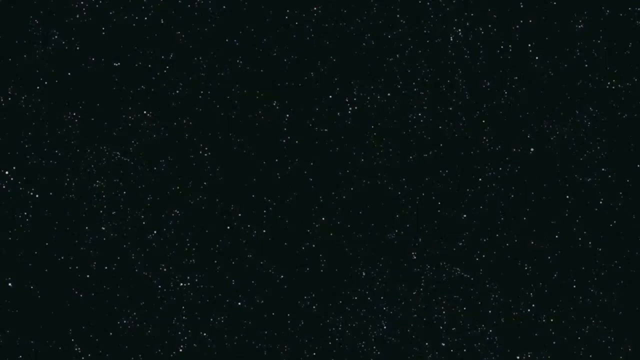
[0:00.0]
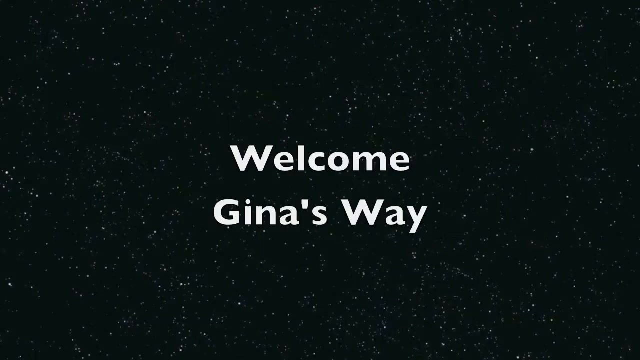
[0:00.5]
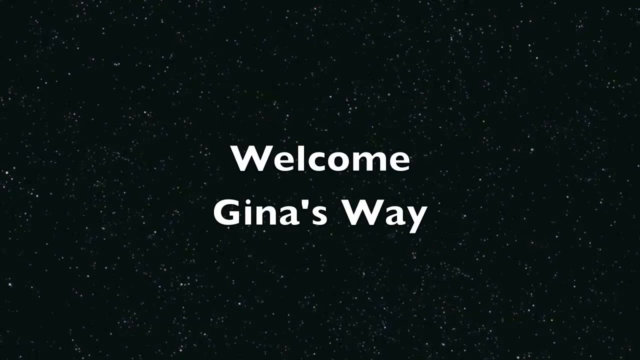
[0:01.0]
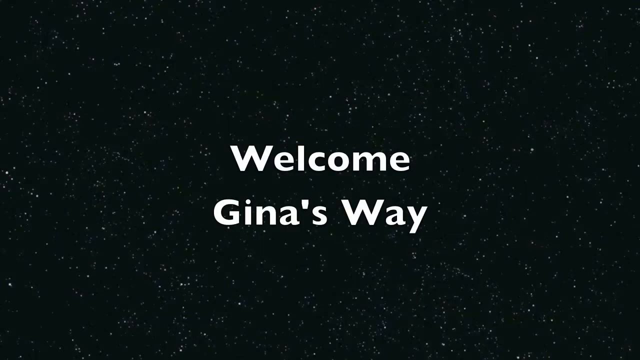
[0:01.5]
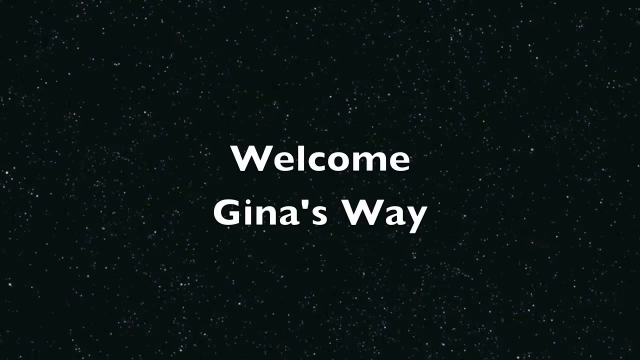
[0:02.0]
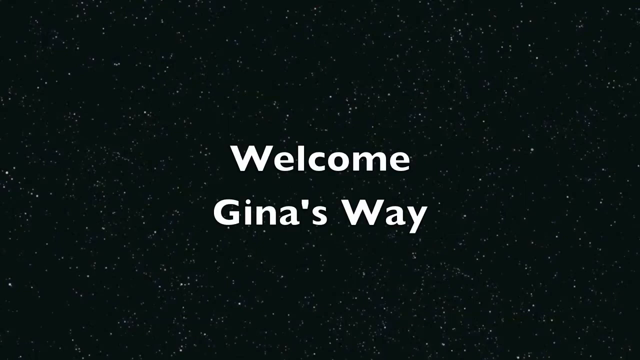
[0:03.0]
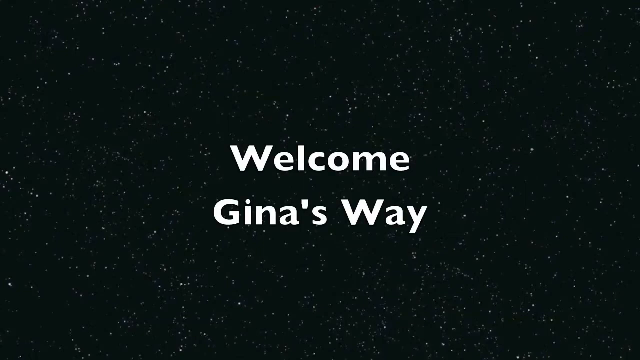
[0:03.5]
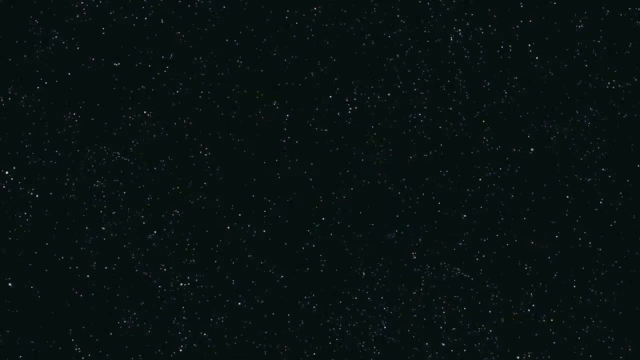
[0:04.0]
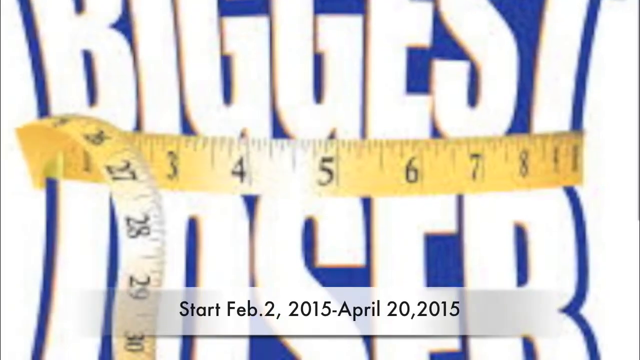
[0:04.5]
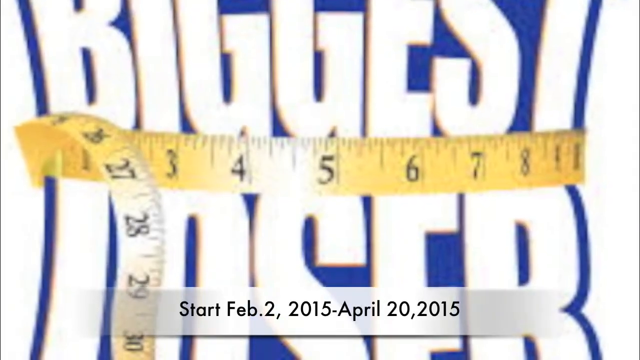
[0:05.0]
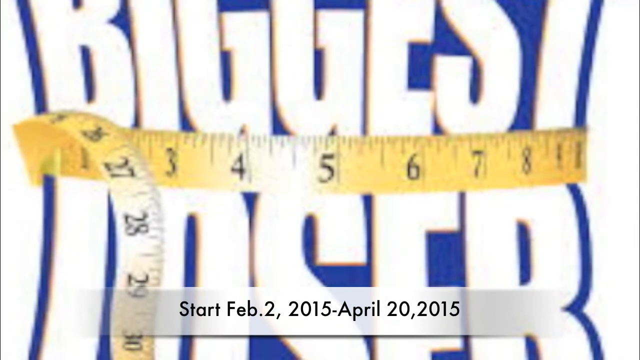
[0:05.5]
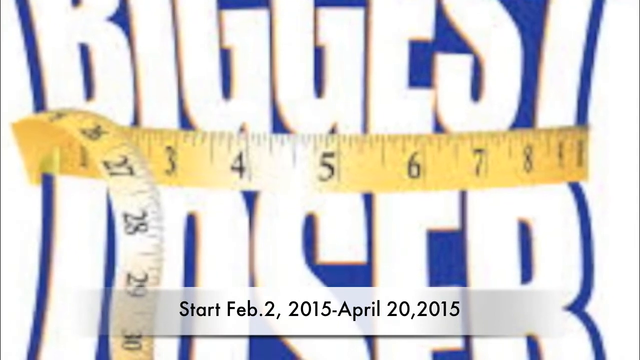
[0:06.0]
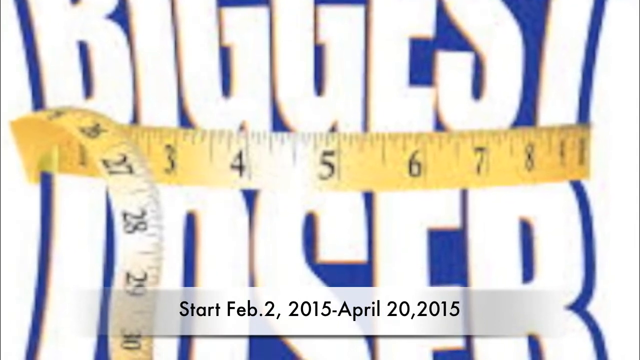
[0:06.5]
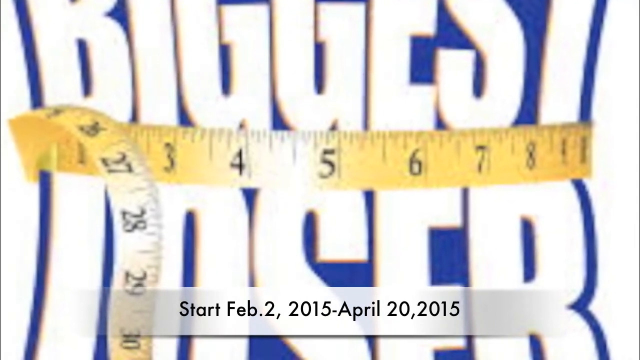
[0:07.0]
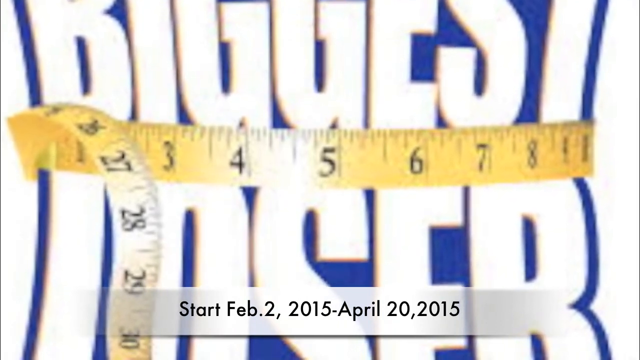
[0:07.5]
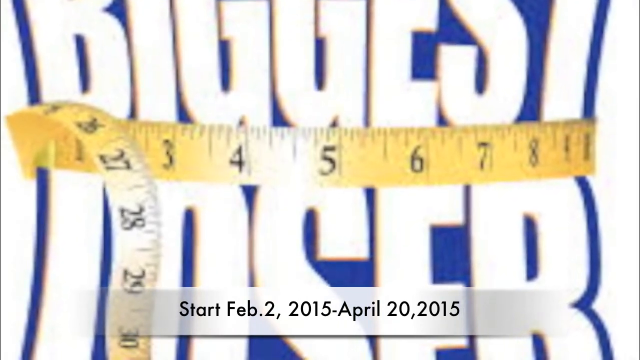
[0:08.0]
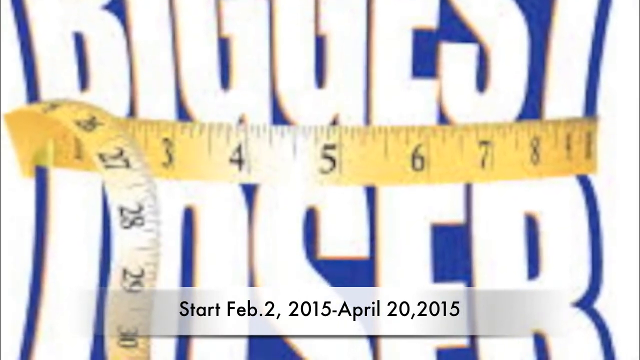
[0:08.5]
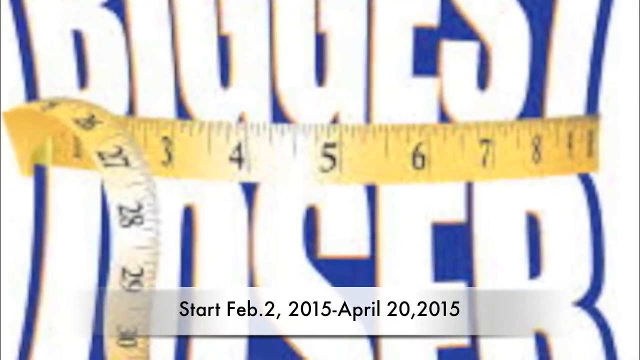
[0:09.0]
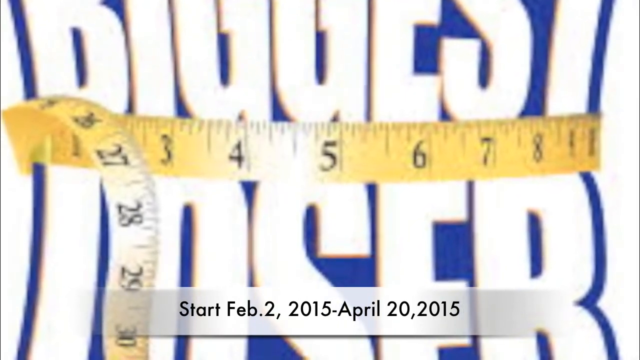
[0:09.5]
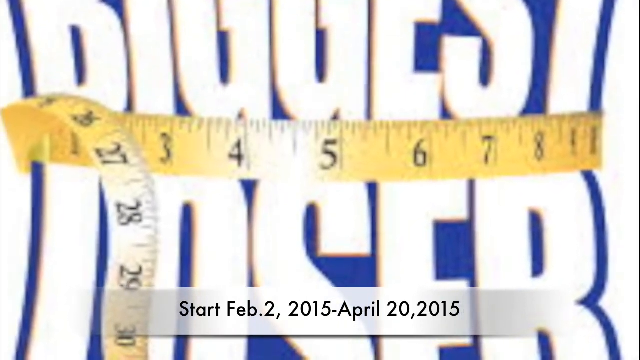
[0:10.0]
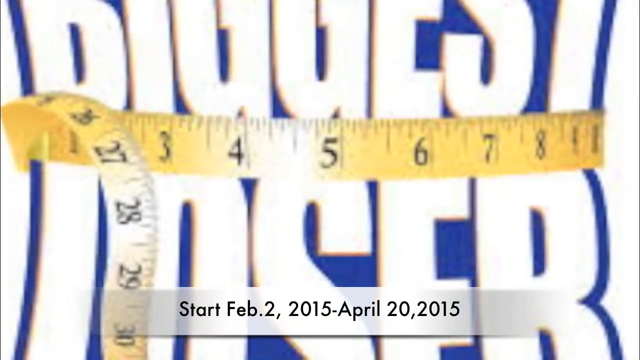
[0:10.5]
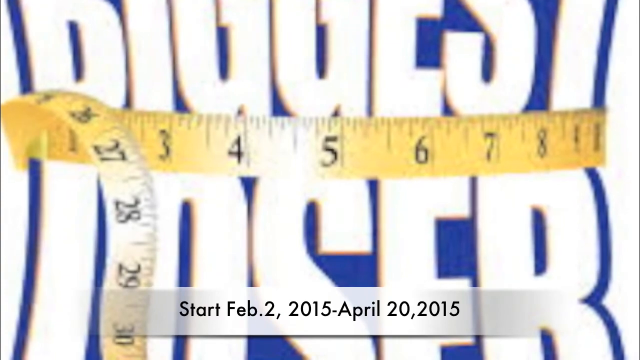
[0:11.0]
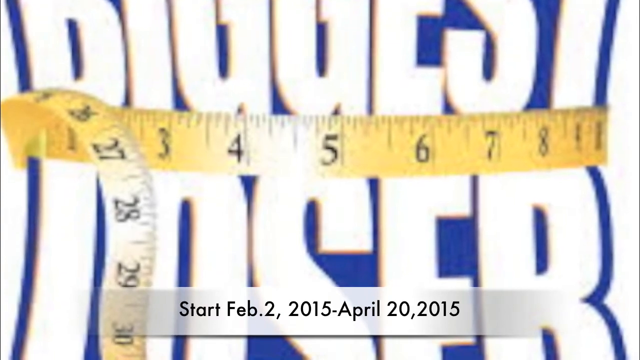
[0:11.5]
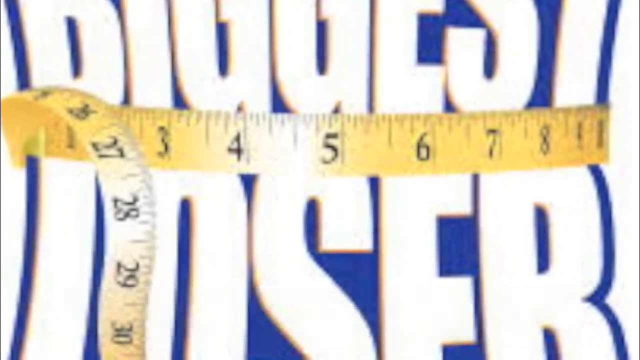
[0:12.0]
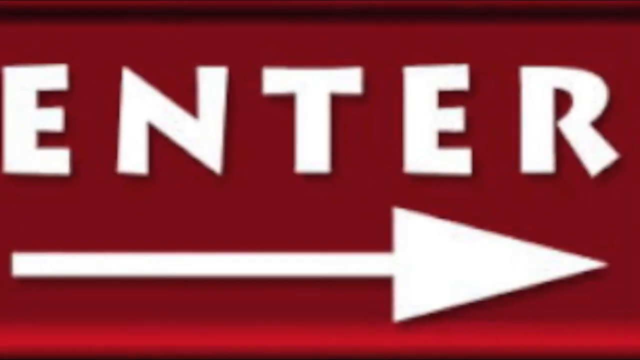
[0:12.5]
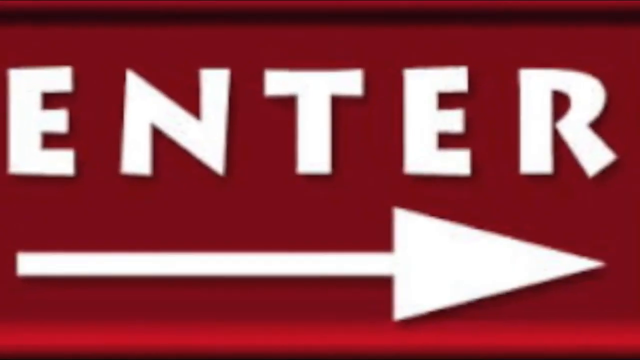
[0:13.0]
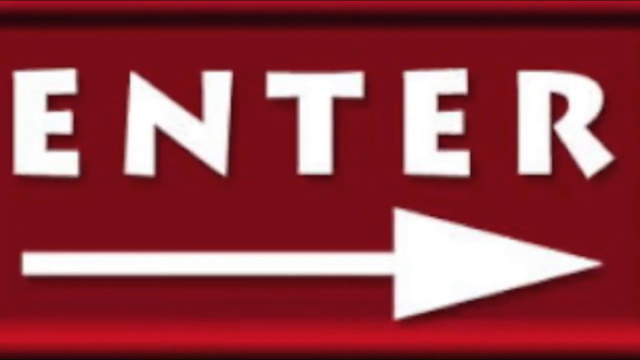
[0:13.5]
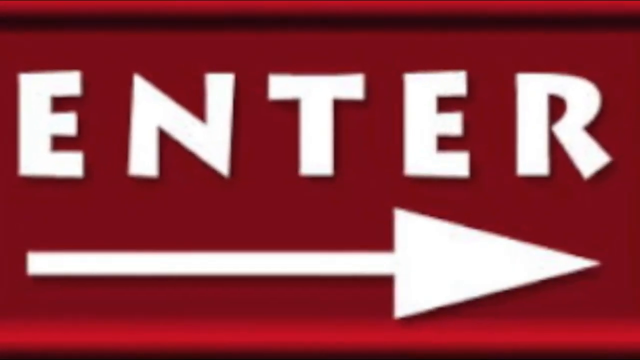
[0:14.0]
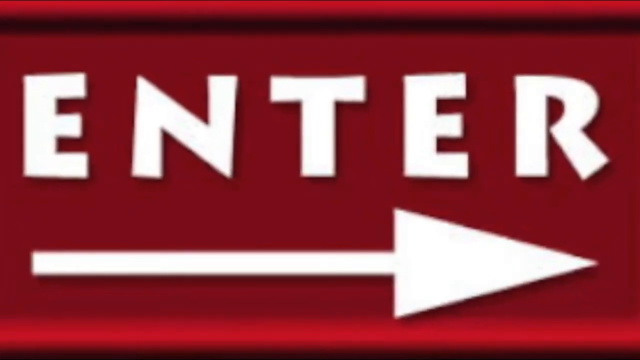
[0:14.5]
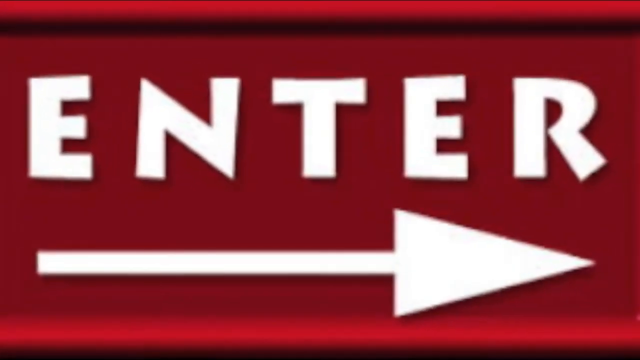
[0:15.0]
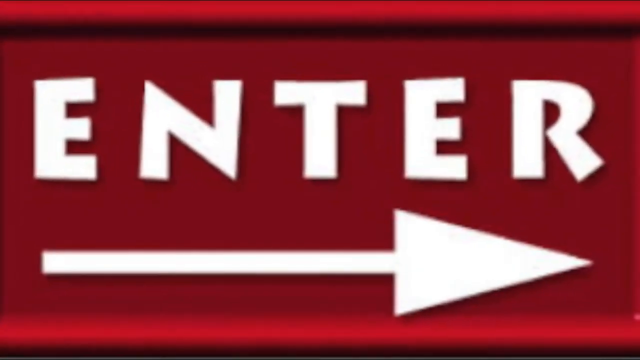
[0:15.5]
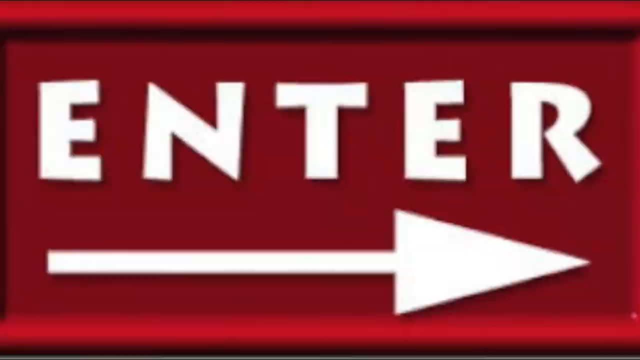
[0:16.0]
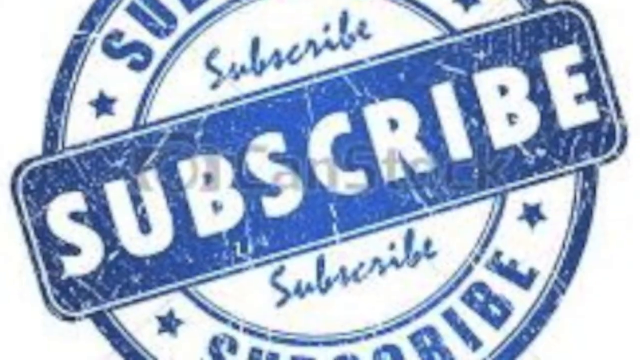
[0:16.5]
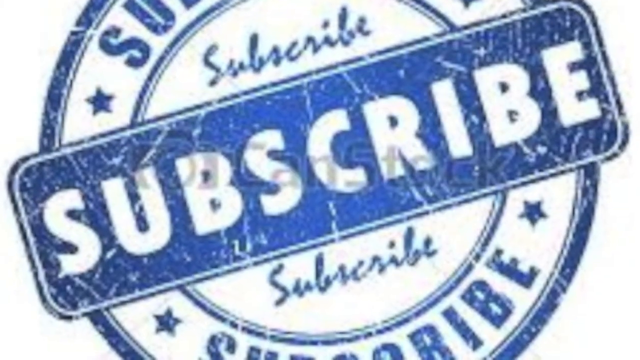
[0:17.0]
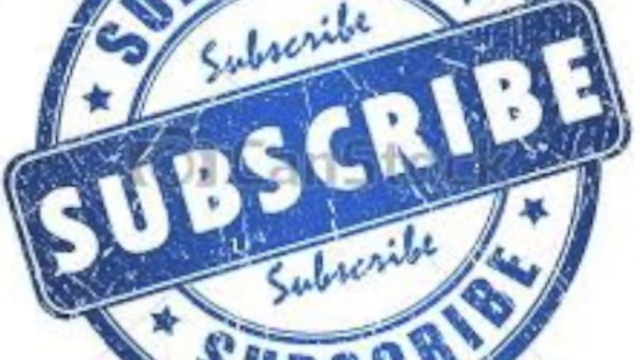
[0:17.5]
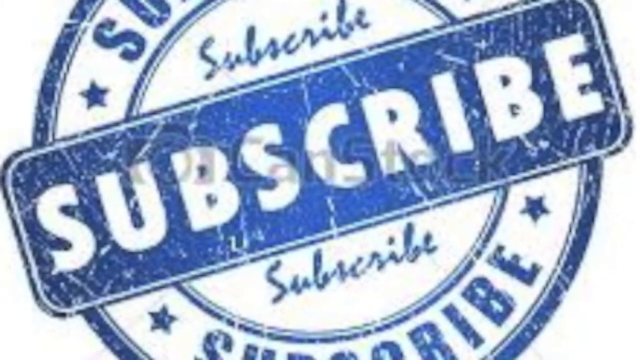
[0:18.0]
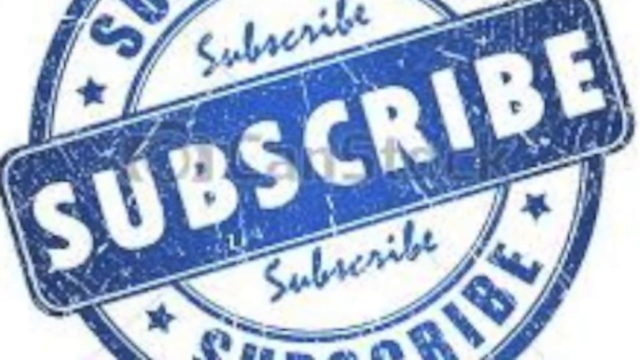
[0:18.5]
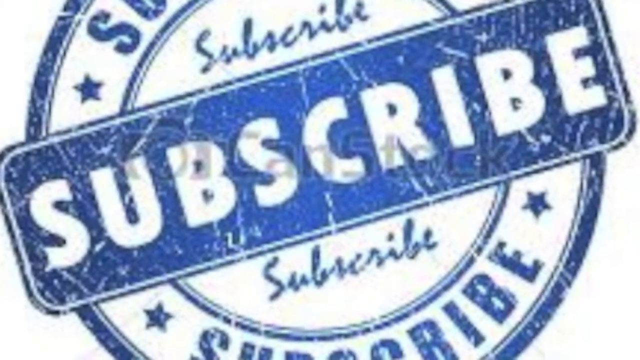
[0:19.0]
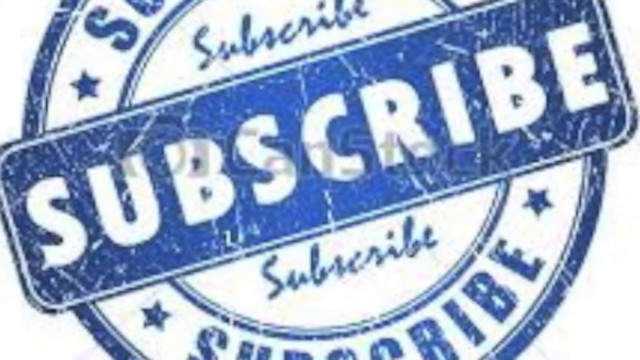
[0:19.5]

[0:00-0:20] The video opens on a black screen covered with many white dots that looks like a starry sky. White text appears in the center of the screen reading "Welcome, Gina's Way"; the apostrophe is a tick mark rather than a proper apostrophe, and the font appears to be Gil Sands Bold, in white on the black background. Next comes the Biggest Loser logo from the TV show, with text at the bottom of the screen reading "Start February 2, 2015 through April 20, 2015." The view slowly zooms in on the logo, then zooms out on an enter sign, followed by a blue subscribe sign styled like a stamp.